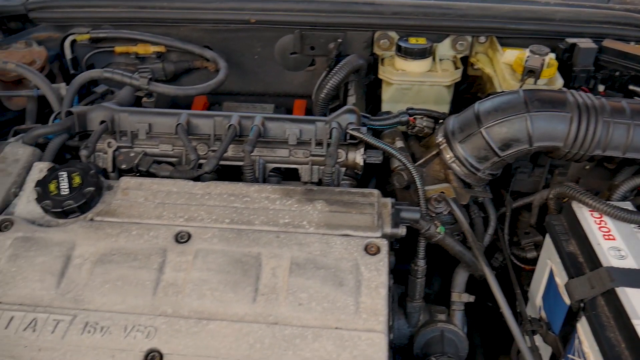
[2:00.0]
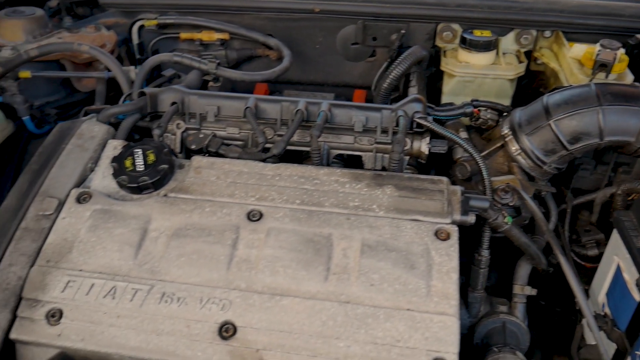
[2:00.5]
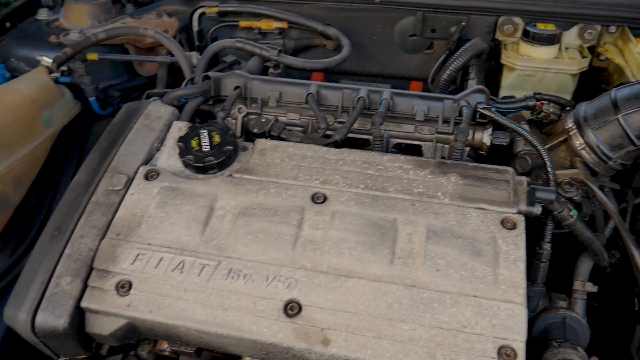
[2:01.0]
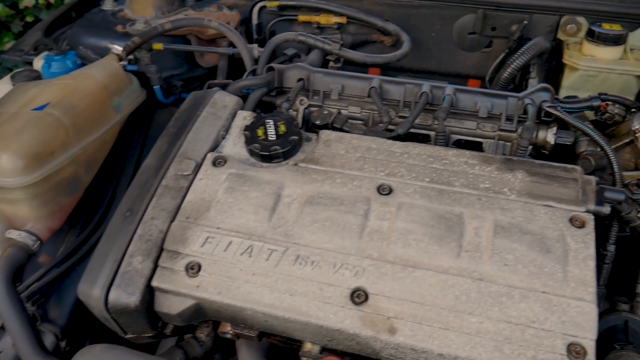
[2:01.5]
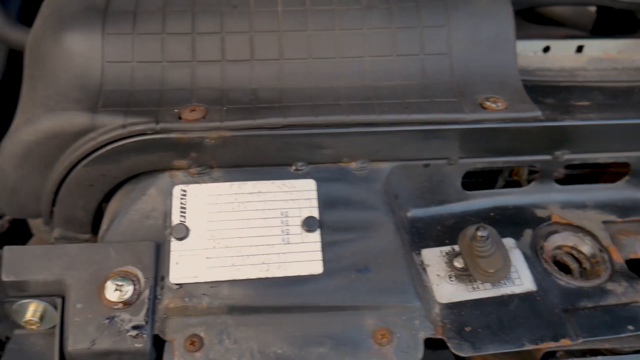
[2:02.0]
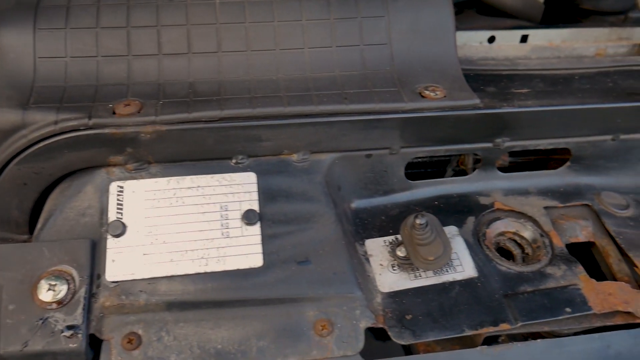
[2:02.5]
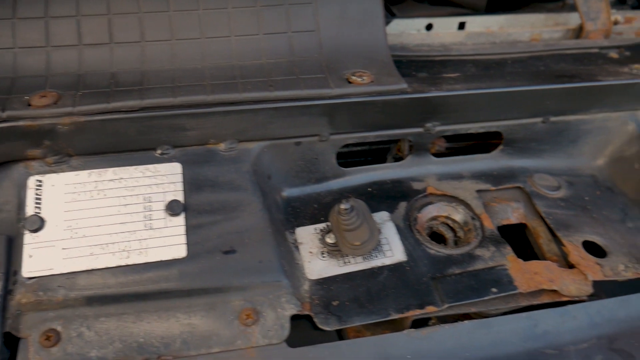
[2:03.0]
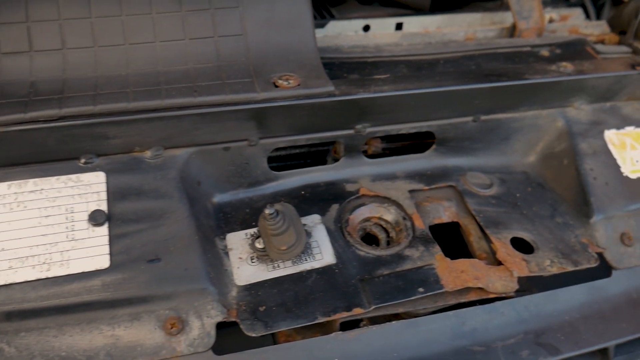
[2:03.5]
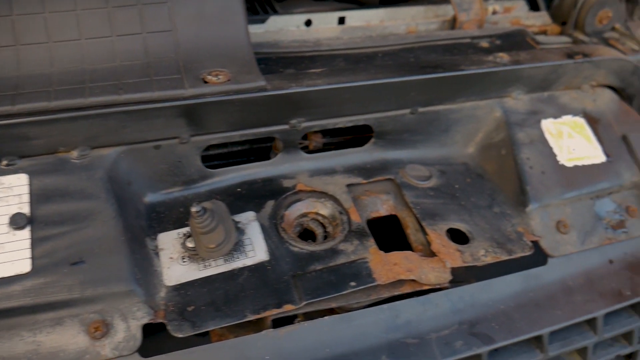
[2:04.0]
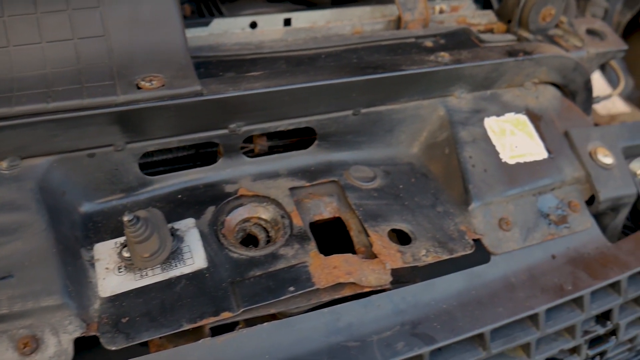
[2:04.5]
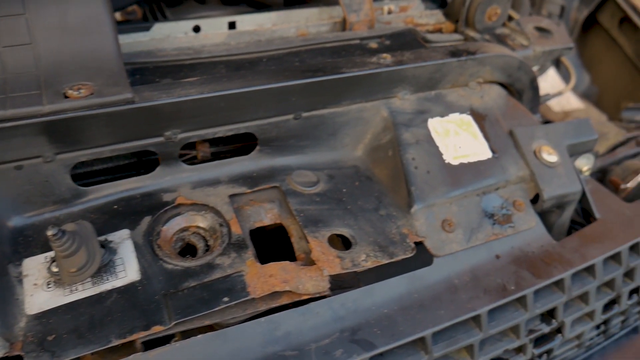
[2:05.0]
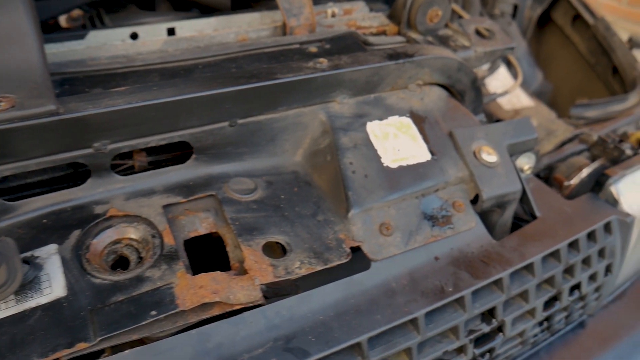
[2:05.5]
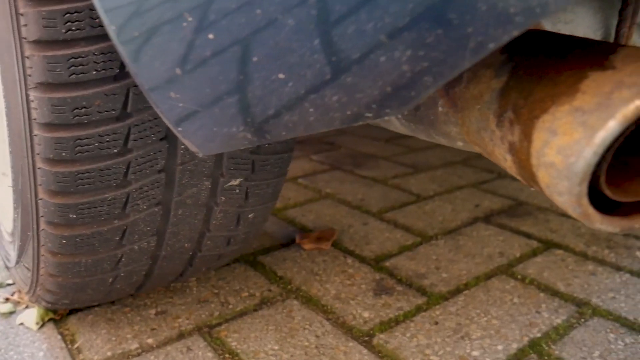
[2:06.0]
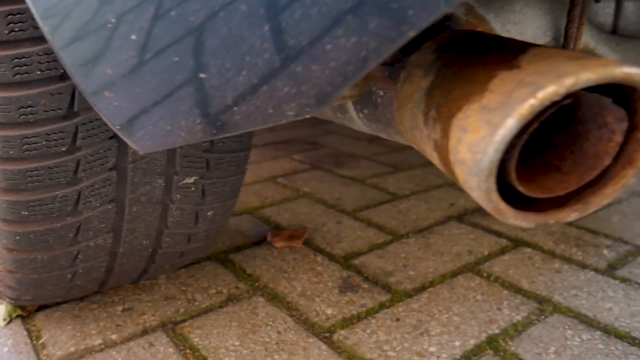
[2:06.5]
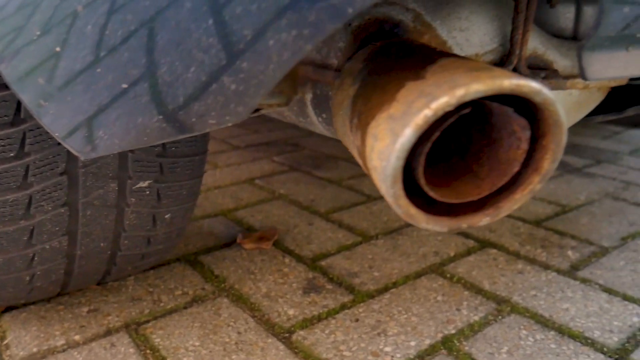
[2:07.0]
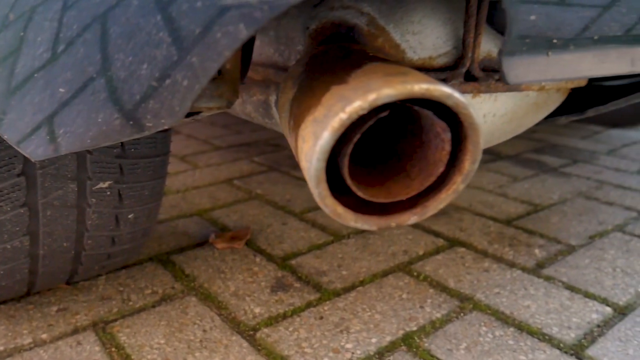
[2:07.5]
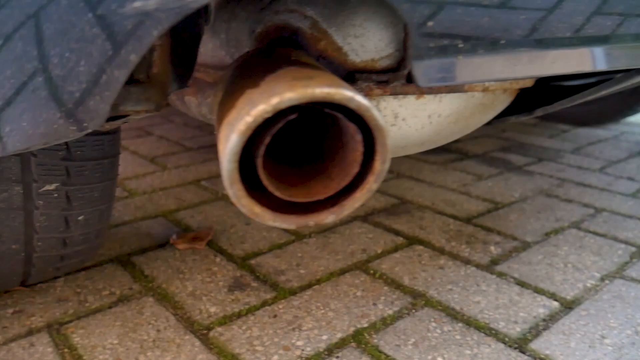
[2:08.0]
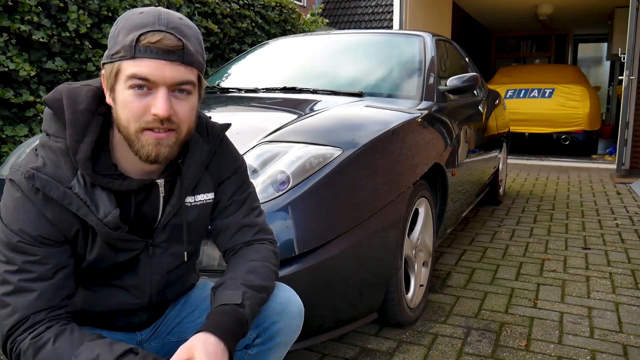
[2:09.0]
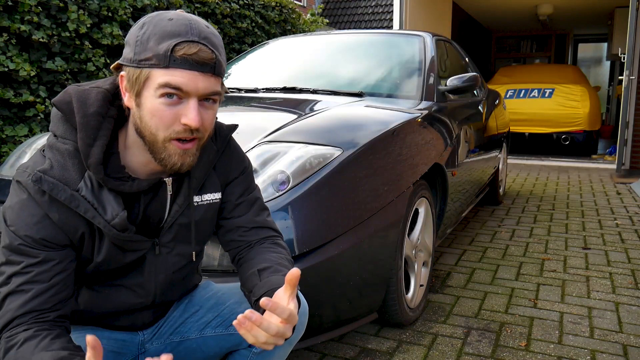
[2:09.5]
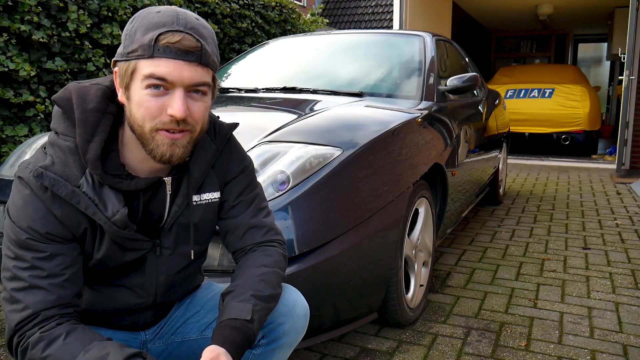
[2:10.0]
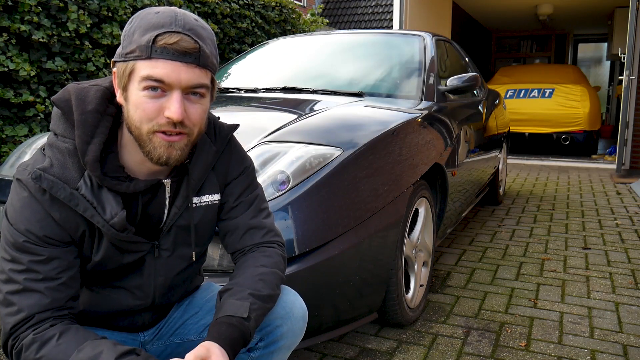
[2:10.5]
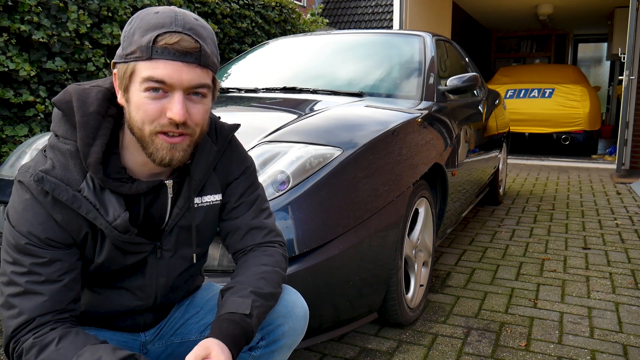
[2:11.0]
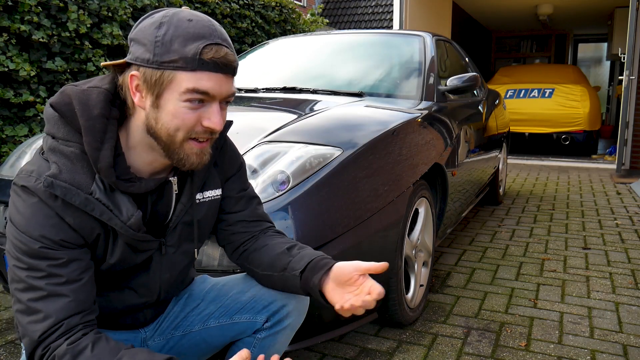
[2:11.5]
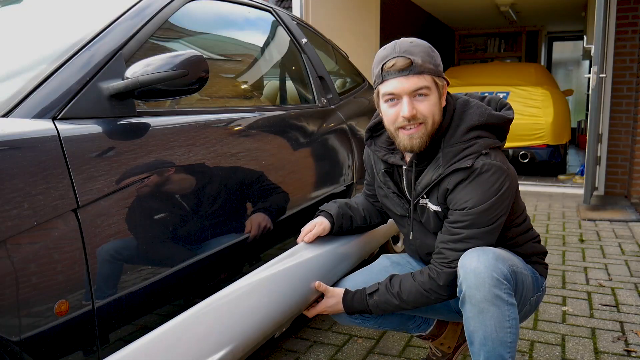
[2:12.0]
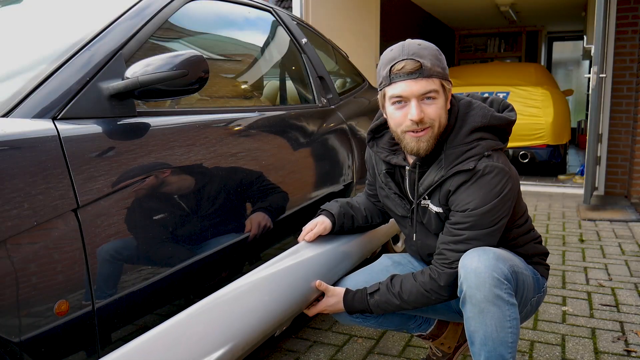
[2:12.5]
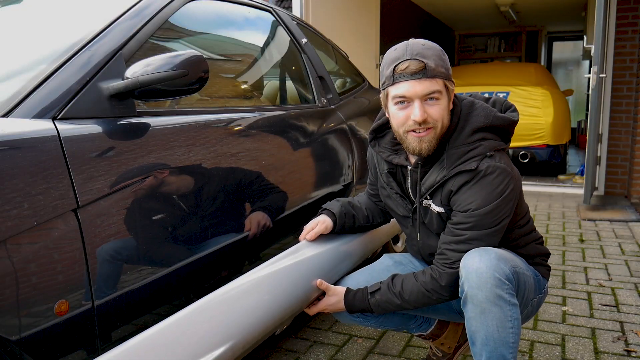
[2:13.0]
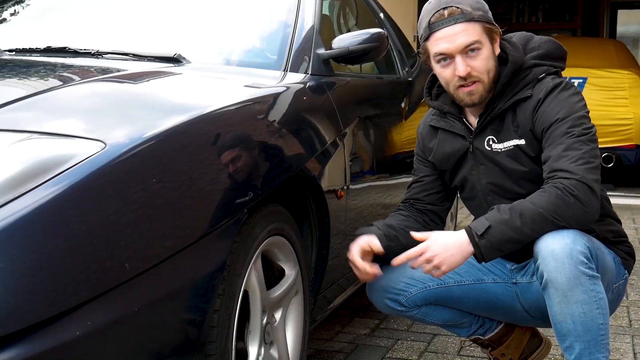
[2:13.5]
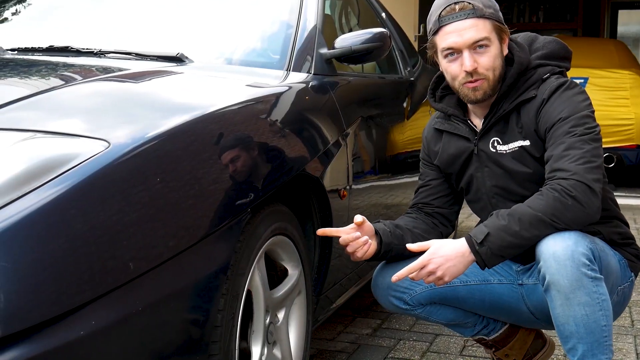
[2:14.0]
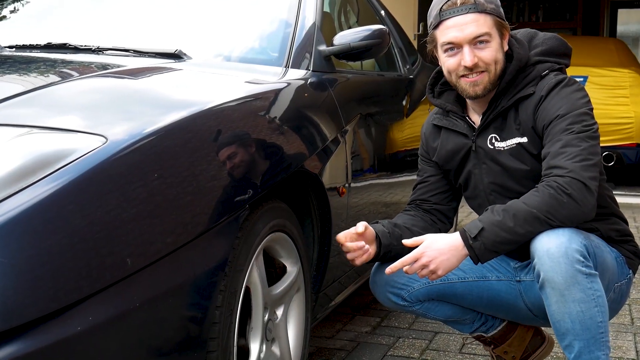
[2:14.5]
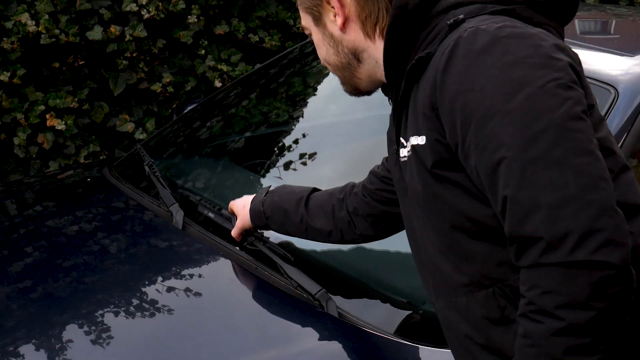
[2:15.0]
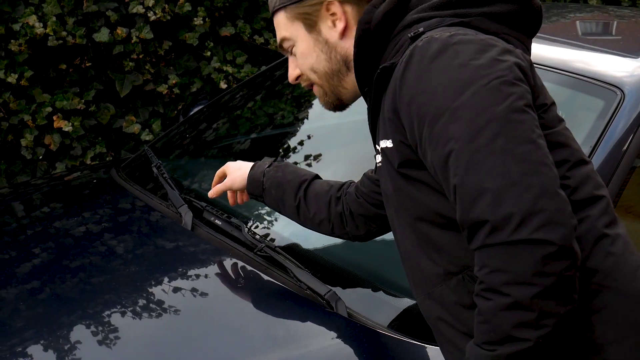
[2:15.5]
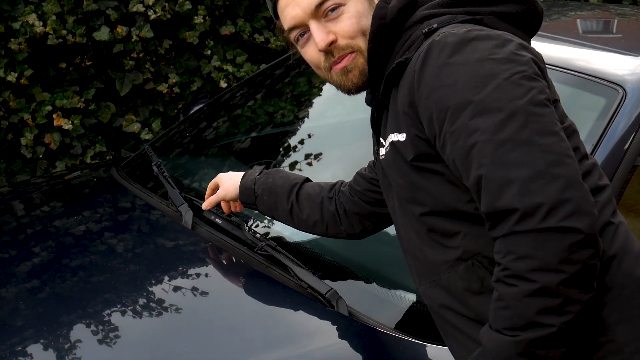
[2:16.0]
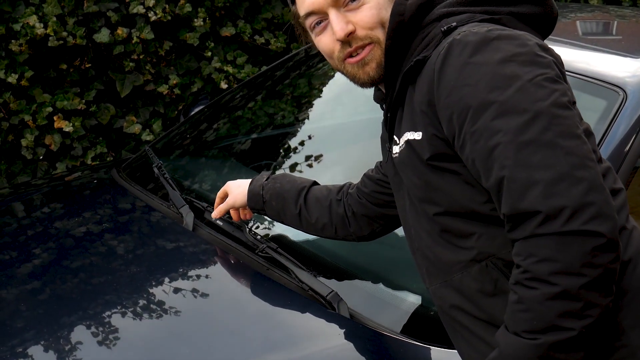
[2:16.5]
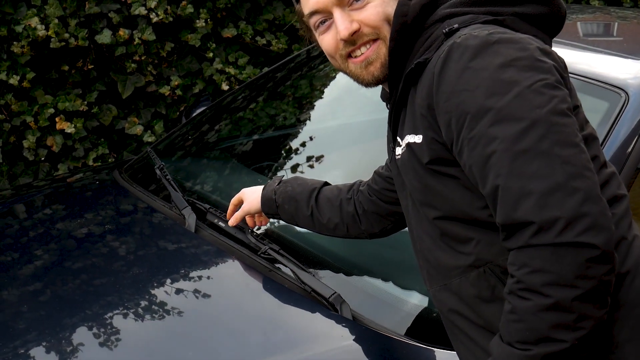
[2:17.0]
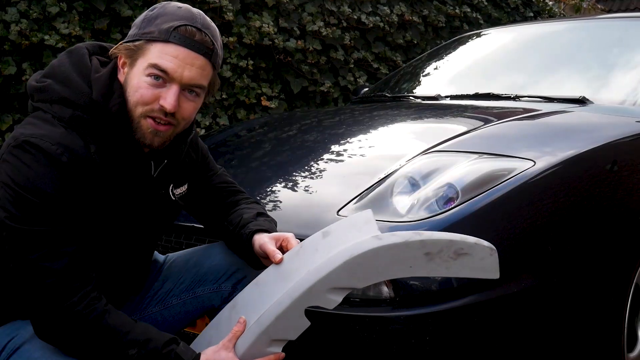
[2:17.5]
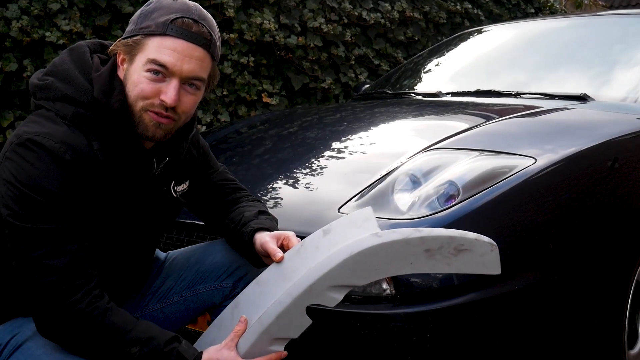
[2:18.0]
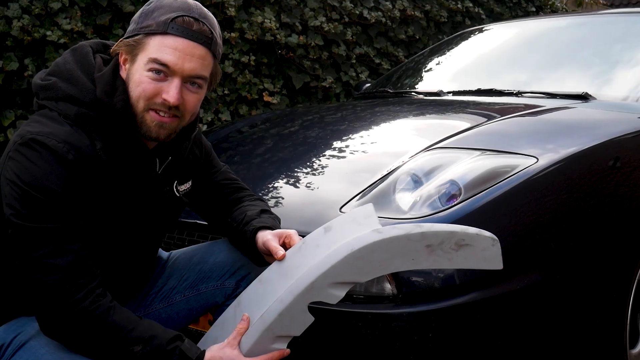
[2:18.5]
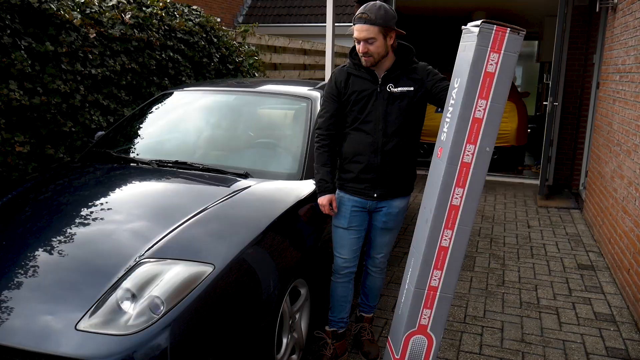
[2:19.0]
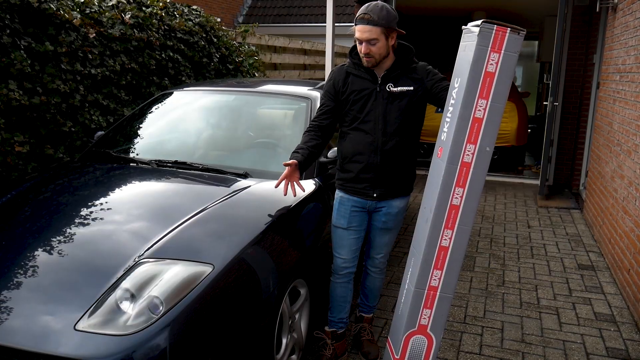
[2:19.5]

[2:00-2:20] The engine is shown, and it is clearly not a new car: the engine has a layer of dust on it, with dirt and oil visible. More parts of the car are shown with a lot of rust; in one place a chunk of metal has kind of rusted off, and the exhaust pipe looks like it has a lot of rust on it. The guy is kind of squatting. He wears a jacket, a hoodie and a hat, has a full beard and hair down to his ears, wears blue jeans, and has some type of logo on his chest; he is probably in his late 20s. Instead of standing by the front of the car, he then appears to be sitting by the driver's side window. Then he stands up, takes the windshield wipers and gives them a gentle pop on the car. He then has some piece of the car in his hands, maybe some new parts.